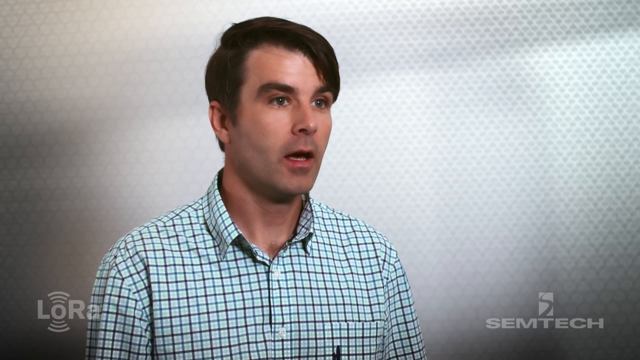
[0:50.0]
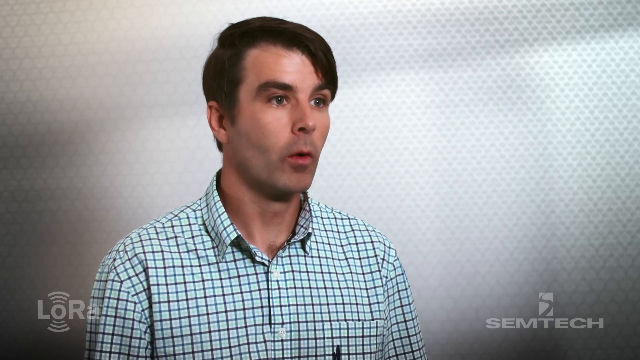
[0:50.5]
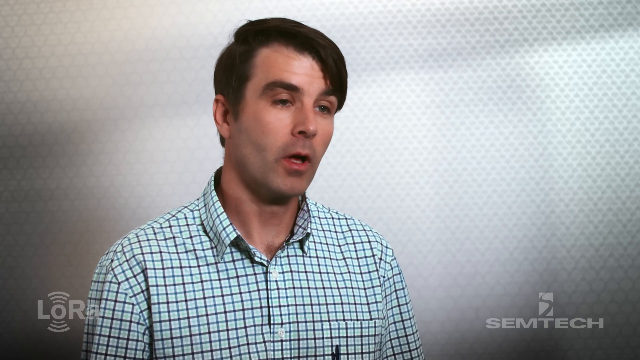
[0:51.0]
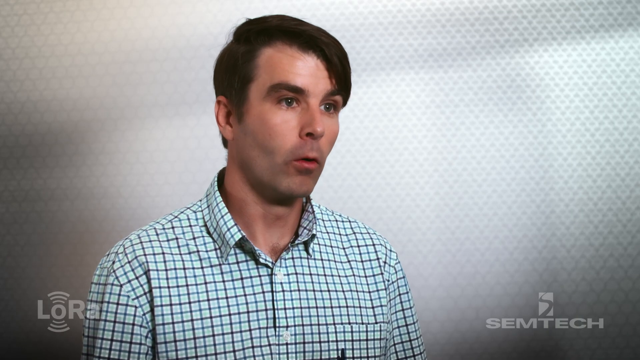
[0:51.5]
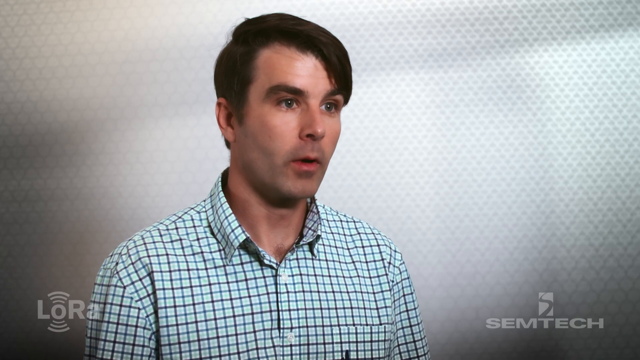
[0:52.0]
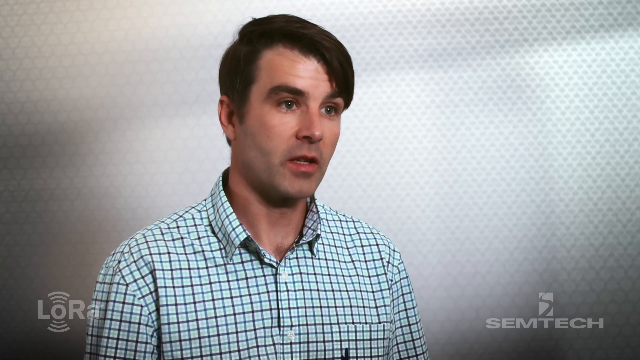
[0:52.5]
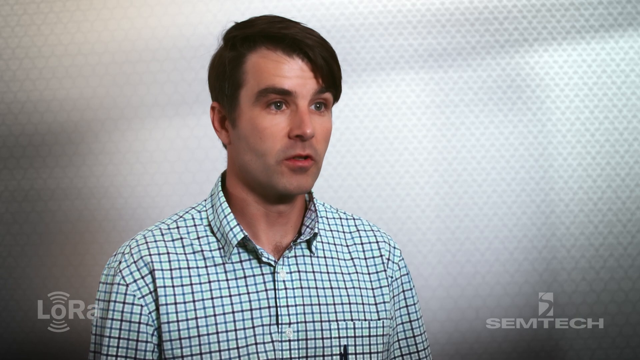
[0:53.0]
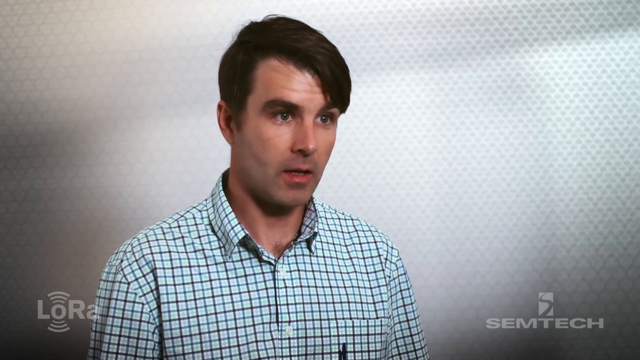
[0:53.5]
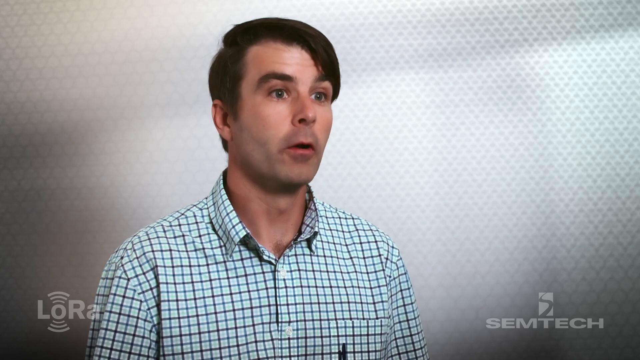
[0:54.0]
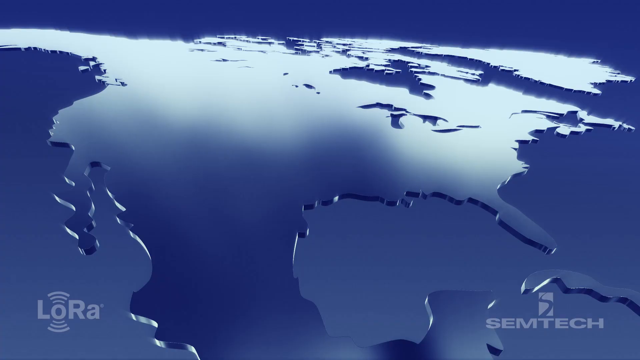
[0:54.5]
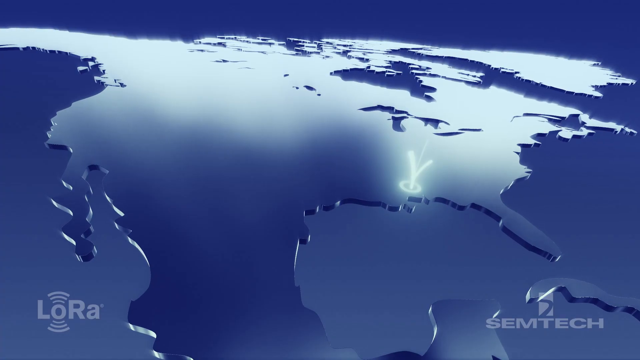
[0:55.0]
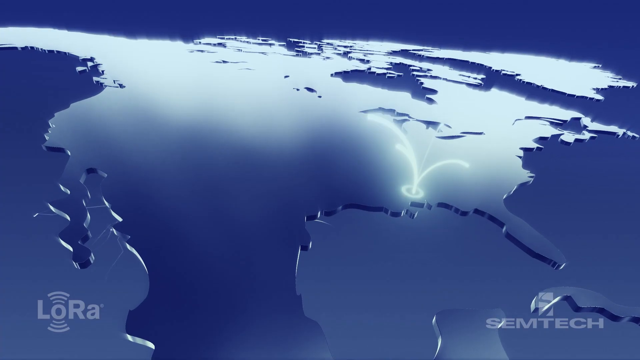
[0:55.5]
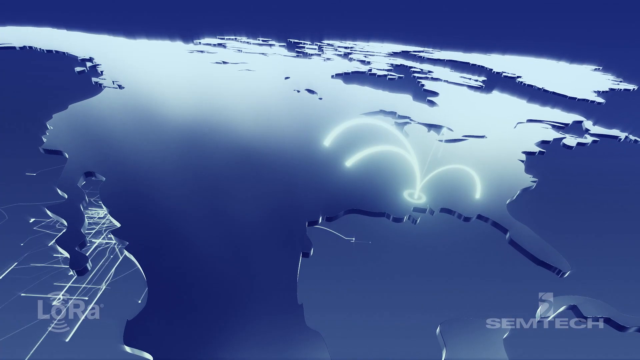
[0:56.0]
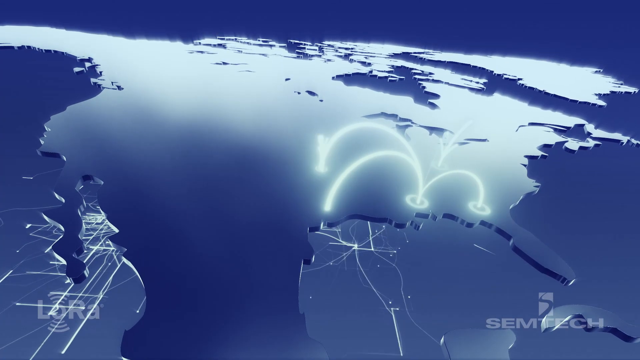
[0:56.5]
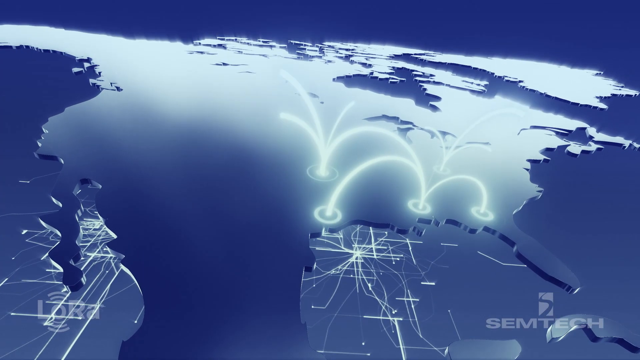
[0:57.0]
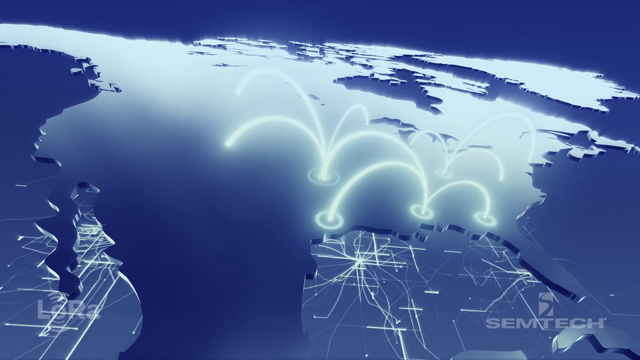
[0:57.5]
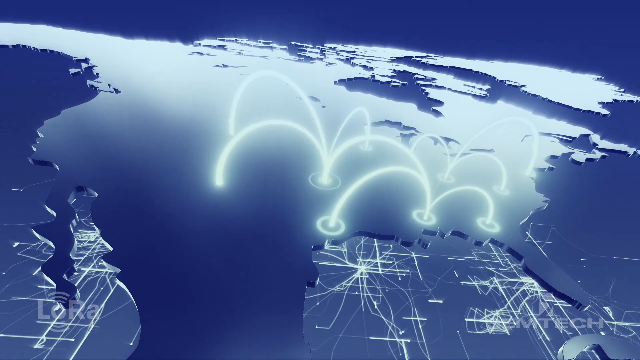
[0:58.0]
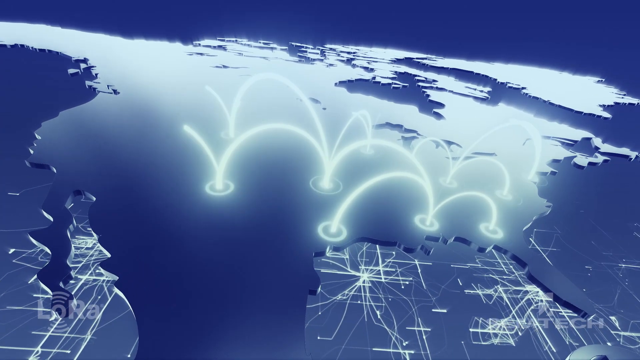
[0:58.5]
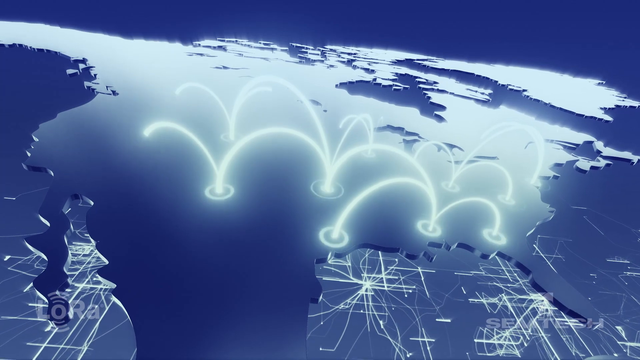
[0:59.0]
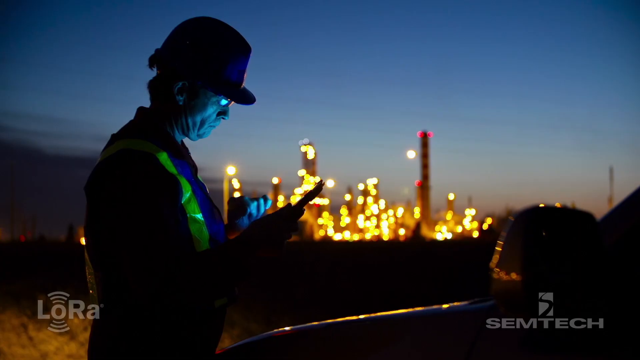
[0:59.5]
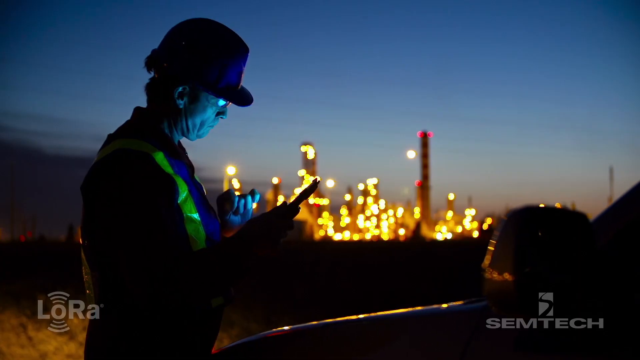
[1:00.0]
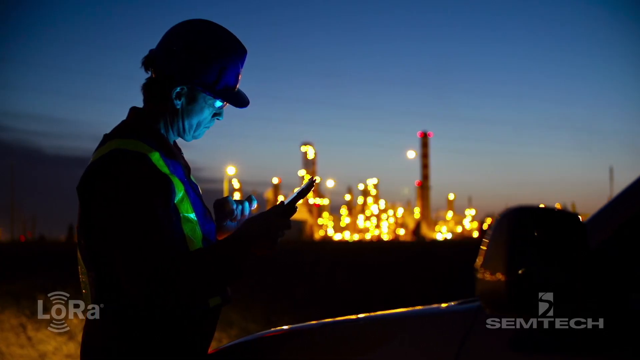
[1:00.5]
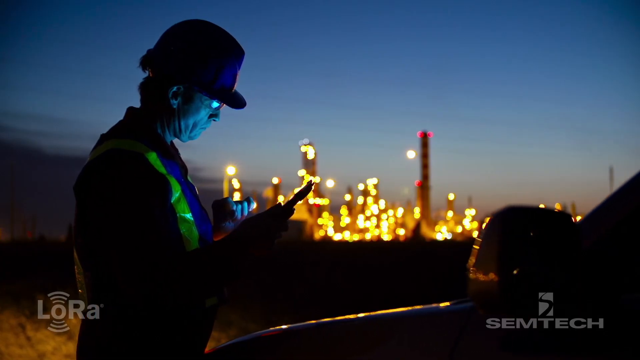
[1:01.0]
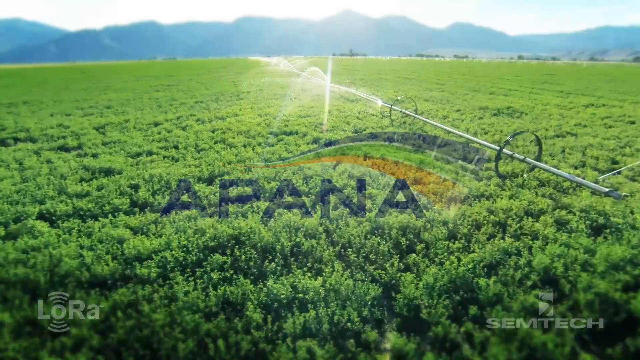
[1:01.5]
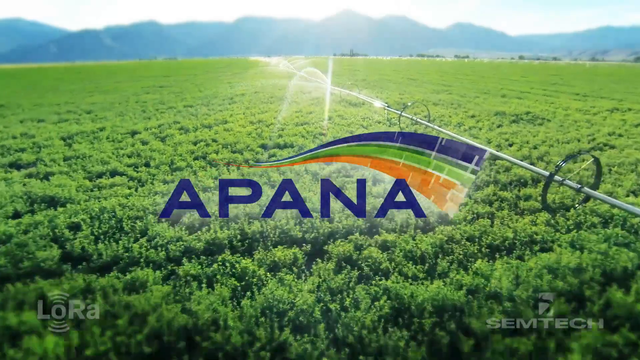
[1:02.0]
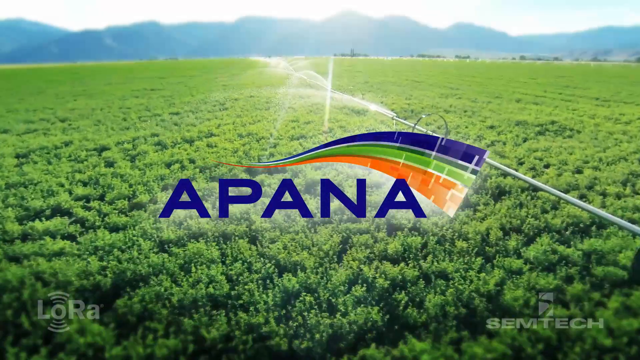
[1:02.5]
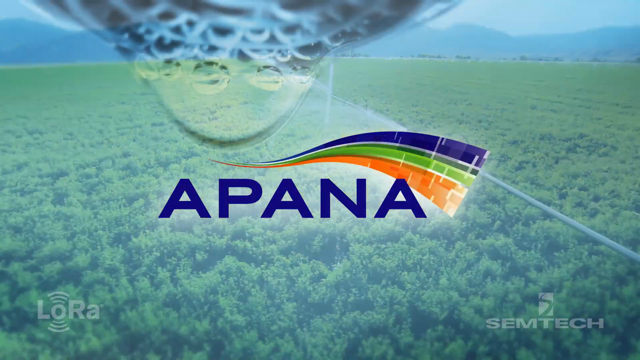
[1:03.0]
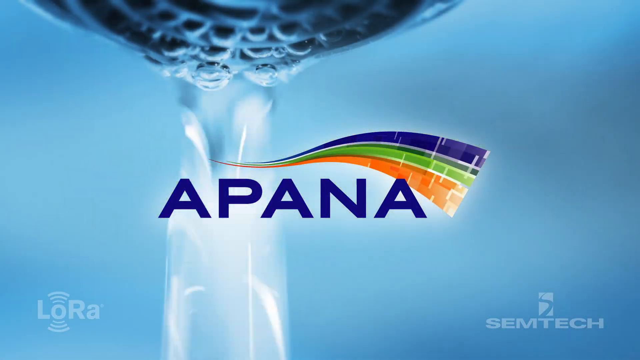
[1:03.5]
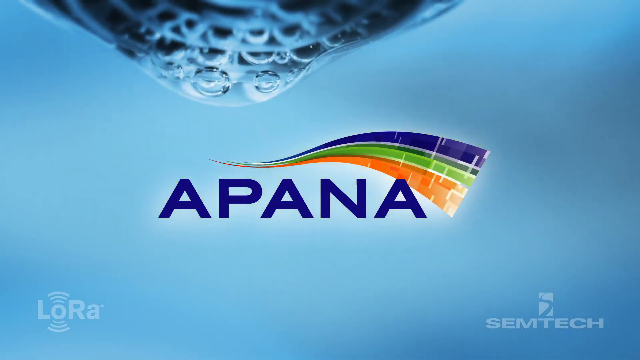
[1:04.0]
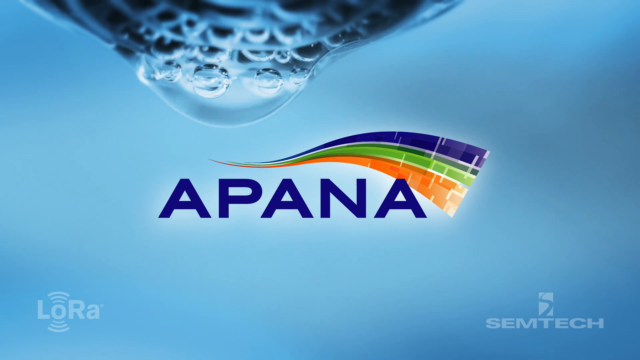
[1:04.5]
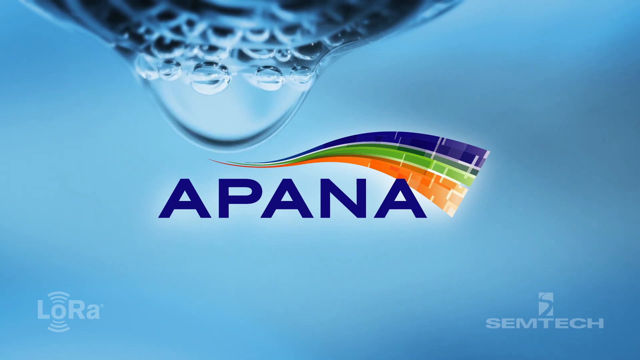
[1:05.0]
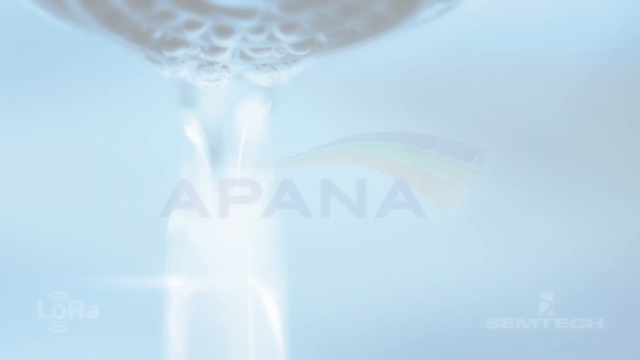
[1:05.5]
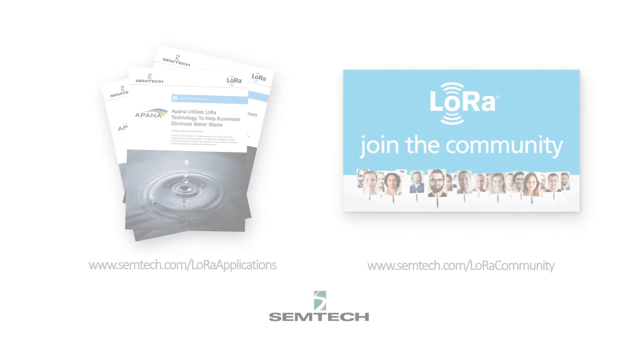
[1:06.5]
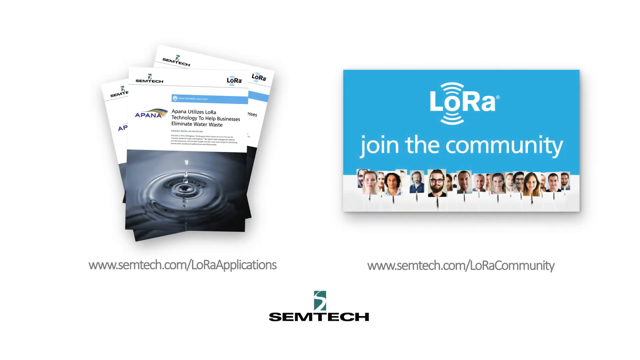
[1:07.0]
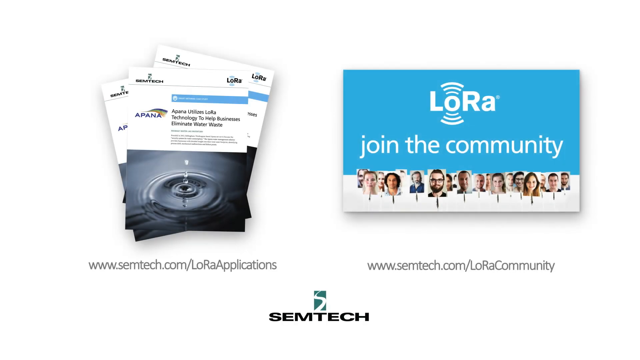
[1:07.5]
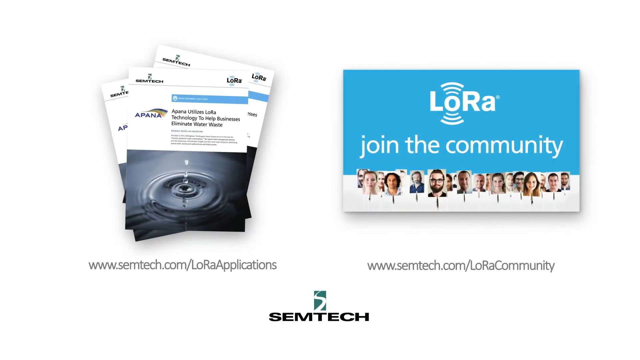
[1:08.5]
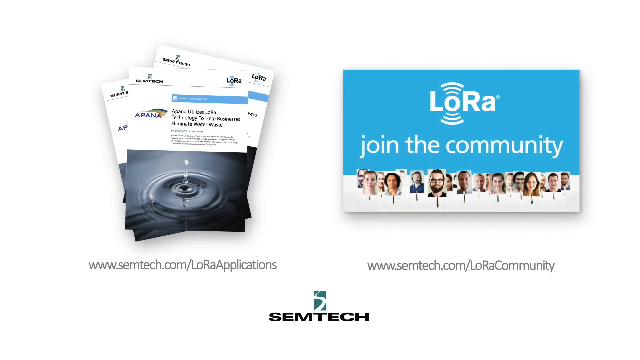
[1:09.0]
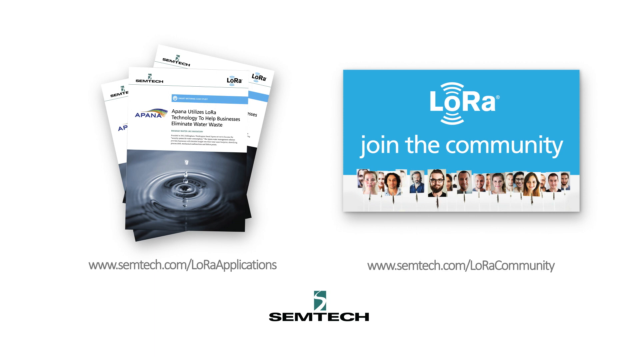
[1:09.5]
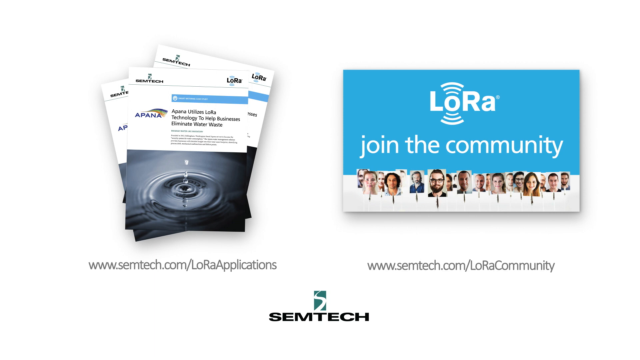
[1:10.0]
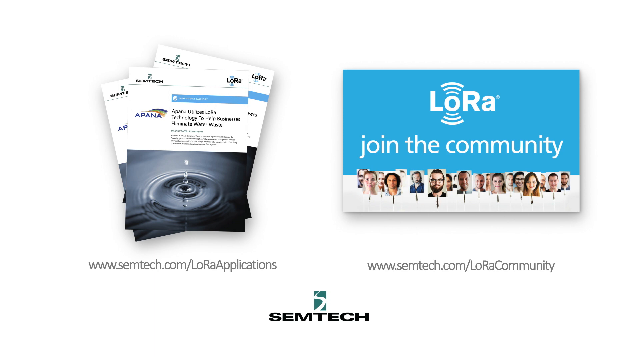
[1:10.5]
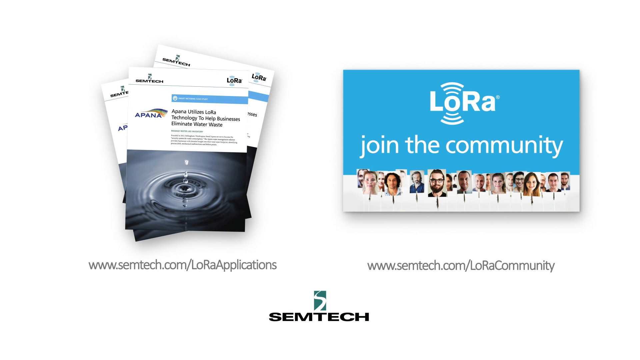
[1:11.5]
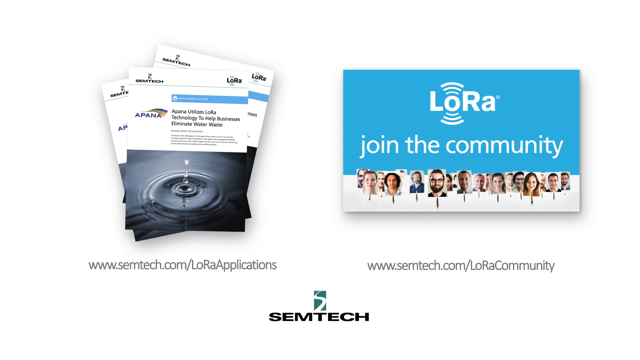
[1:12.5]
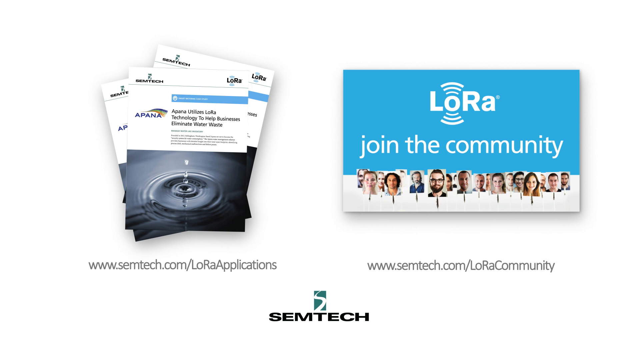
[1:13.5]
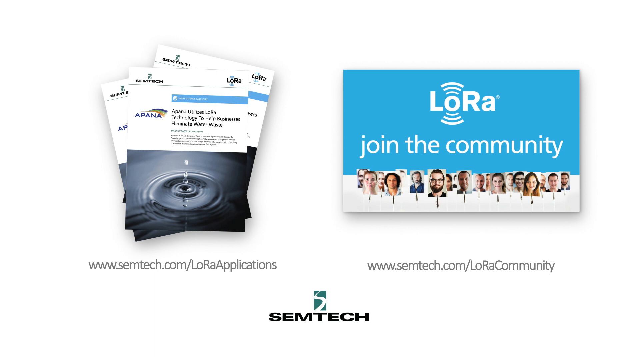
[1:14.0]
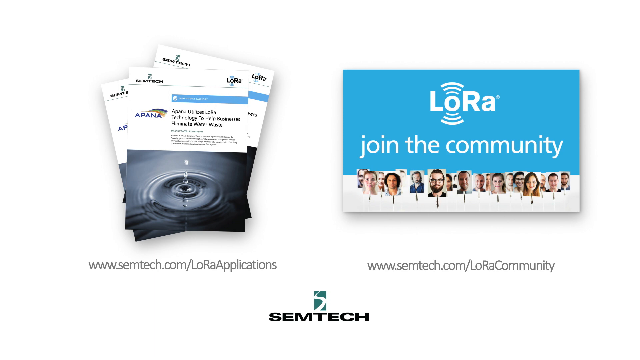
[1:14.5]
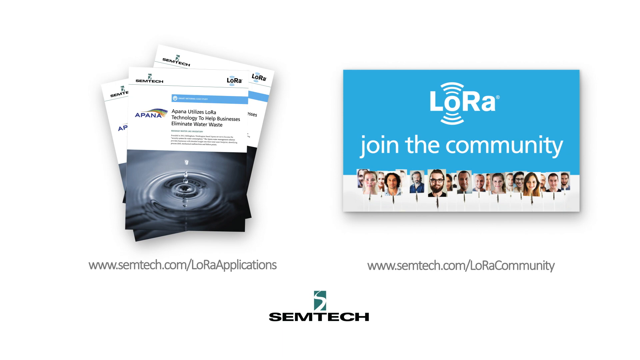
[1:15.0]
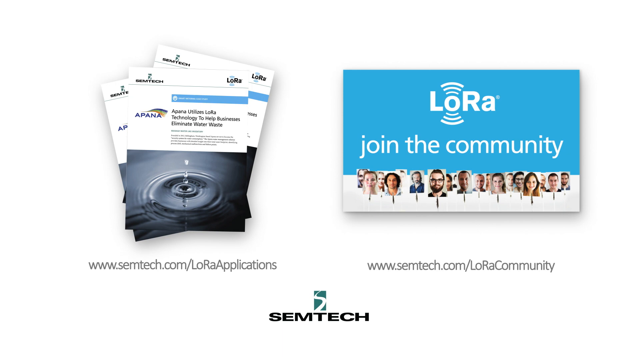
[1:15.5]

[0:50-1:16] Matt Haynard-Peterson, the CTO of APANA, appears, with the CEMTEC logo in the bottom right-hand corner and the LORA logo in the bottom left-hand corner. A map of the United States follows, with light coming out of it in various places. Next, a construction worker in a yellow vest and a dark hat holds a tablet at night, with lights in the background as it begins to get dark. A long field is then shown being irrigated, with hills and mountains in the background, irrigation water coming out, and green everywhere. Finally, a large blueprint of Apenna is shown front and center.